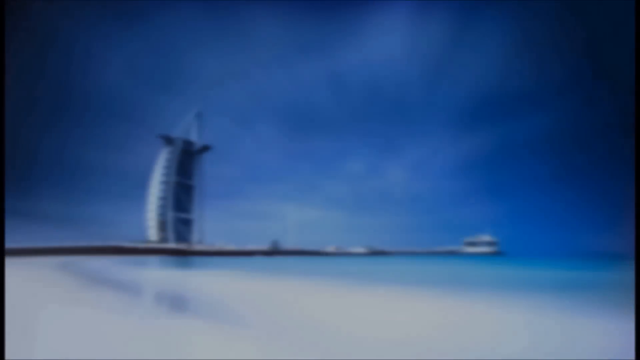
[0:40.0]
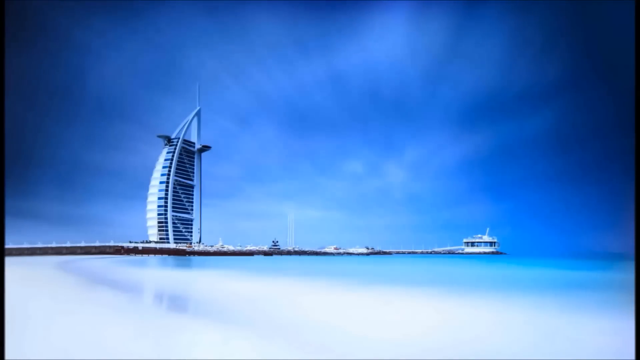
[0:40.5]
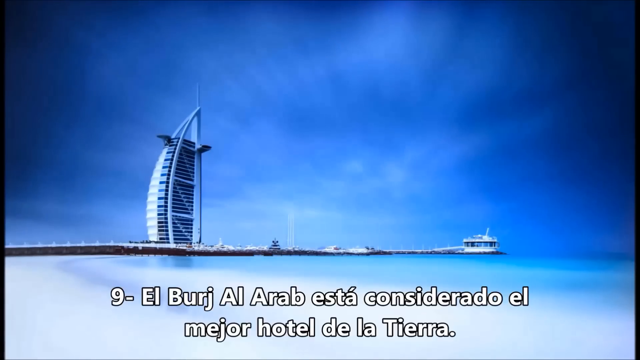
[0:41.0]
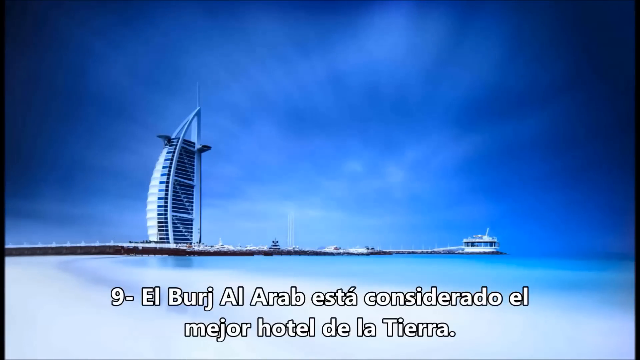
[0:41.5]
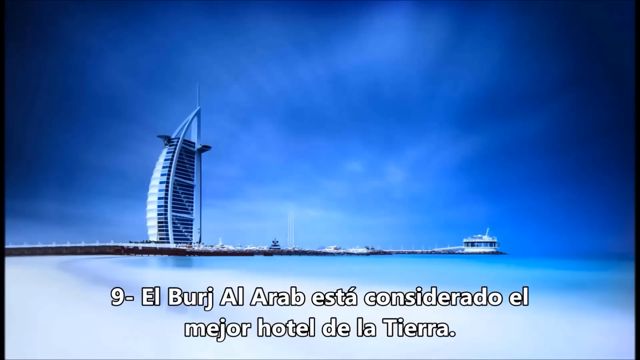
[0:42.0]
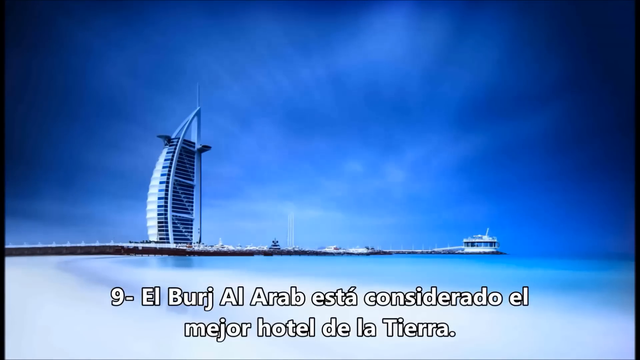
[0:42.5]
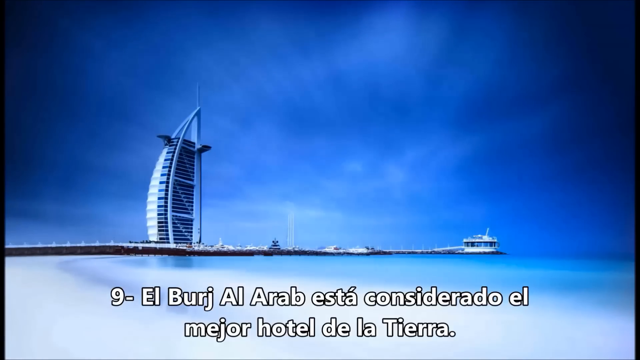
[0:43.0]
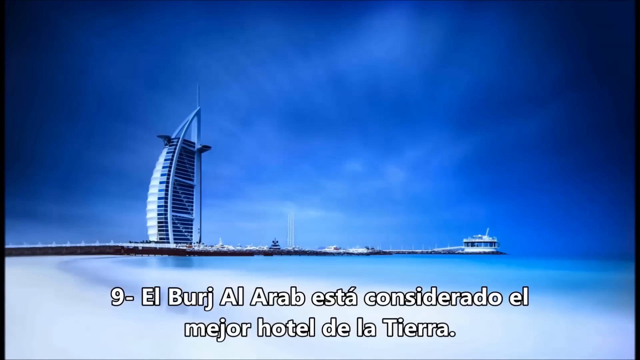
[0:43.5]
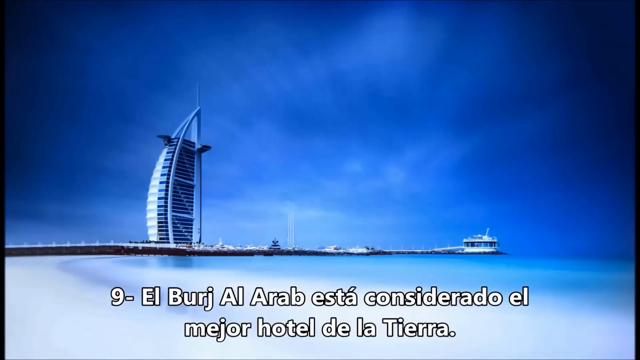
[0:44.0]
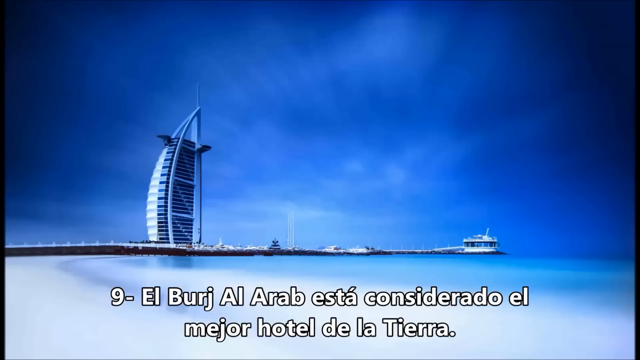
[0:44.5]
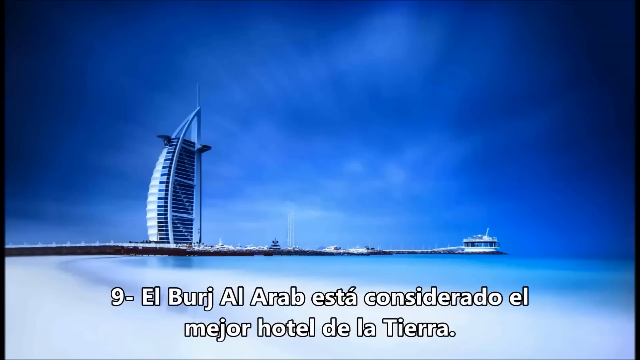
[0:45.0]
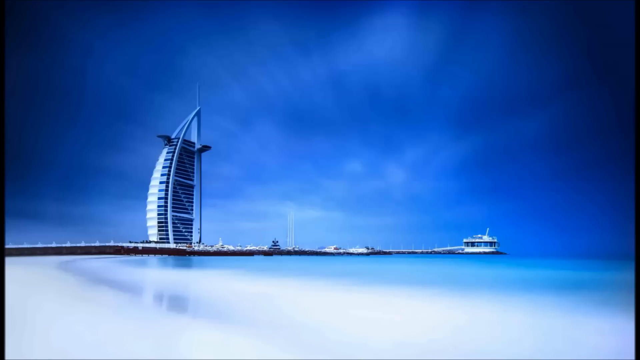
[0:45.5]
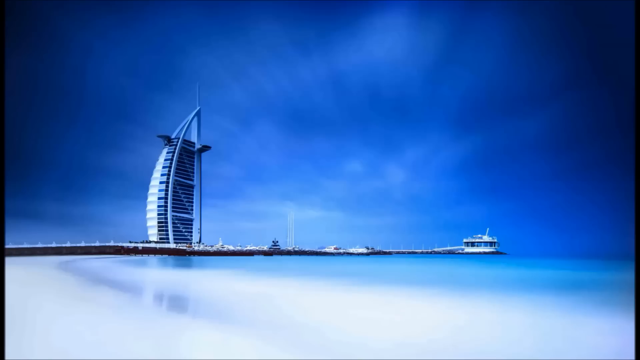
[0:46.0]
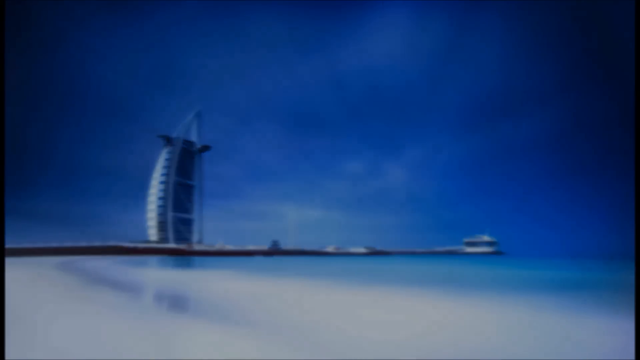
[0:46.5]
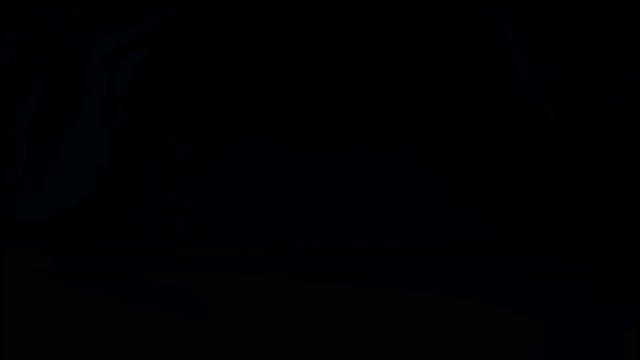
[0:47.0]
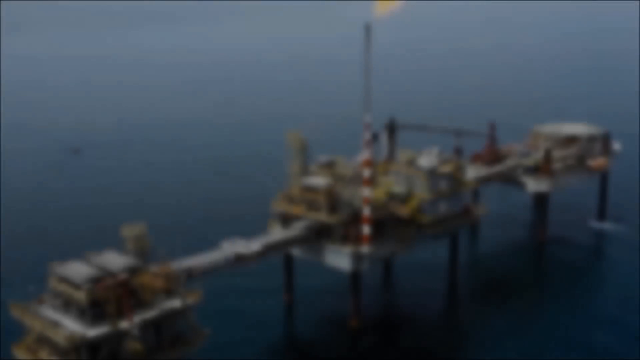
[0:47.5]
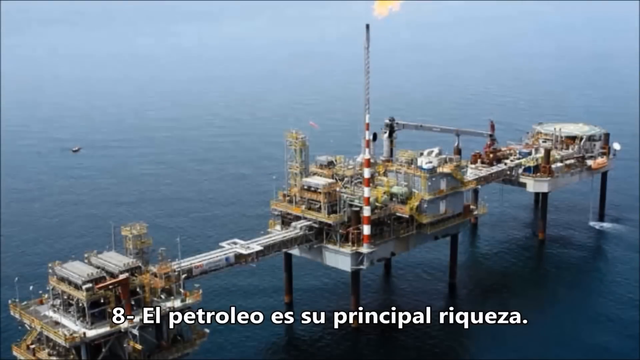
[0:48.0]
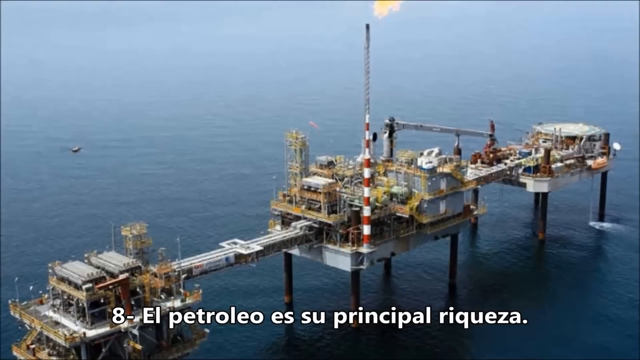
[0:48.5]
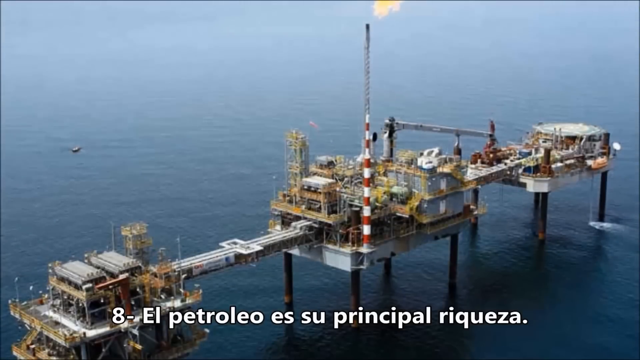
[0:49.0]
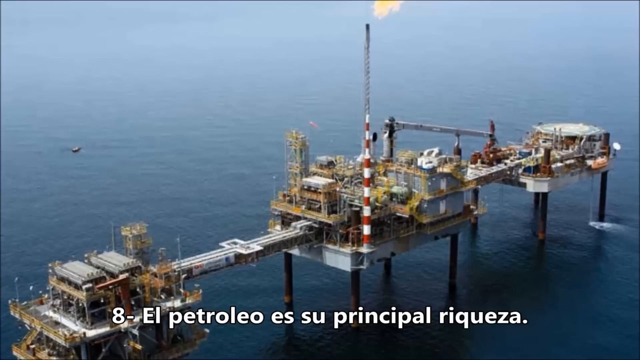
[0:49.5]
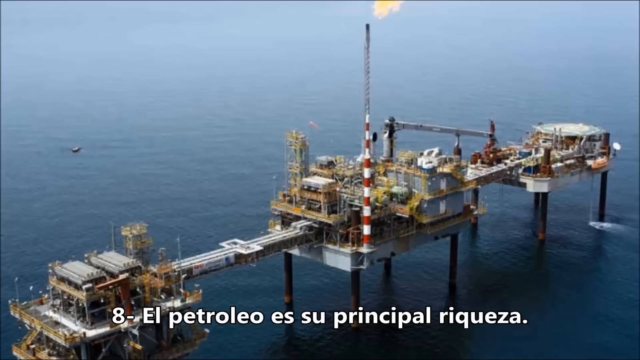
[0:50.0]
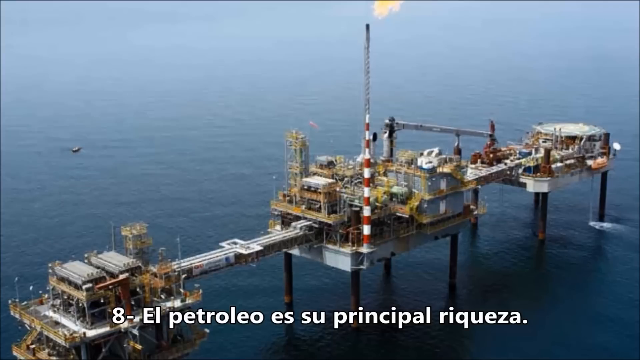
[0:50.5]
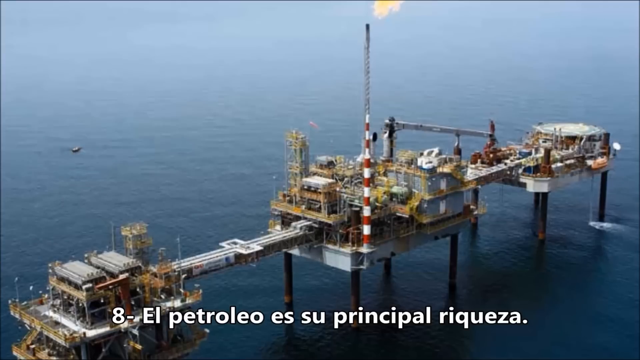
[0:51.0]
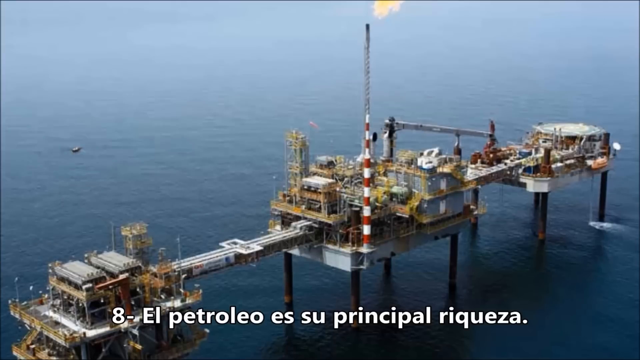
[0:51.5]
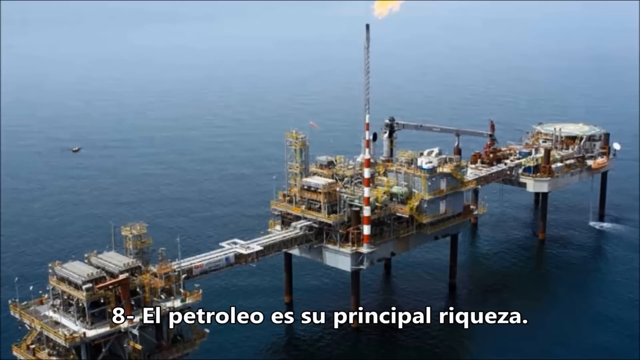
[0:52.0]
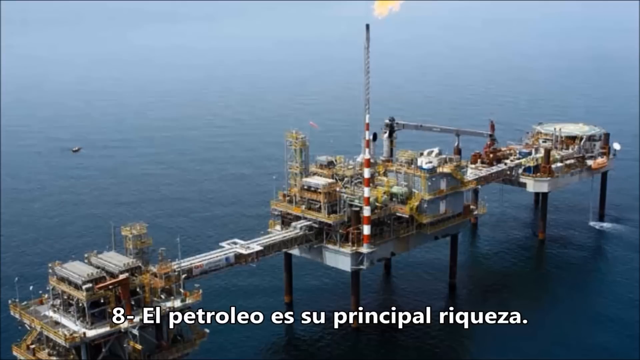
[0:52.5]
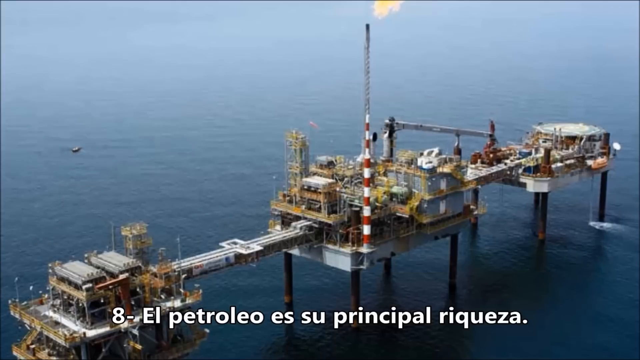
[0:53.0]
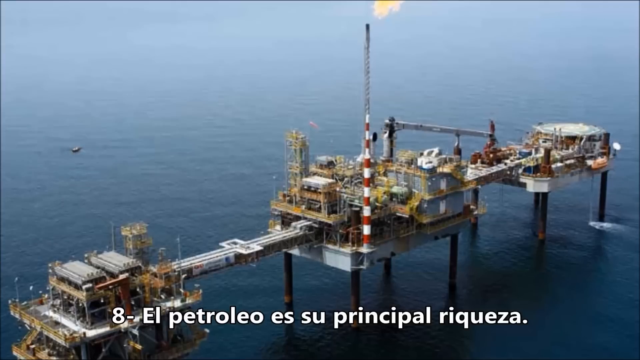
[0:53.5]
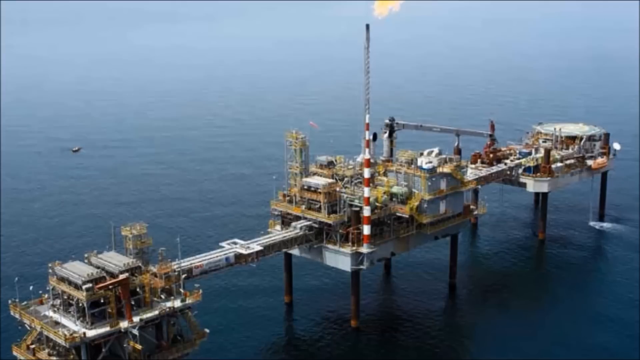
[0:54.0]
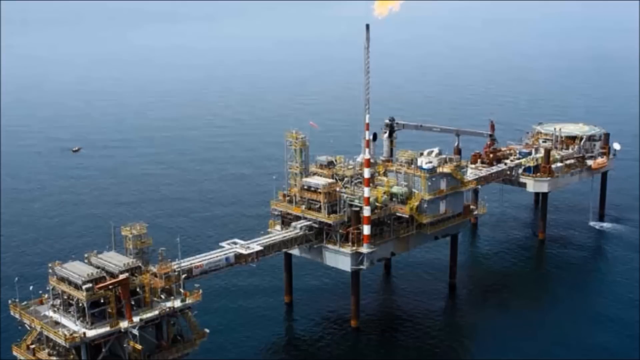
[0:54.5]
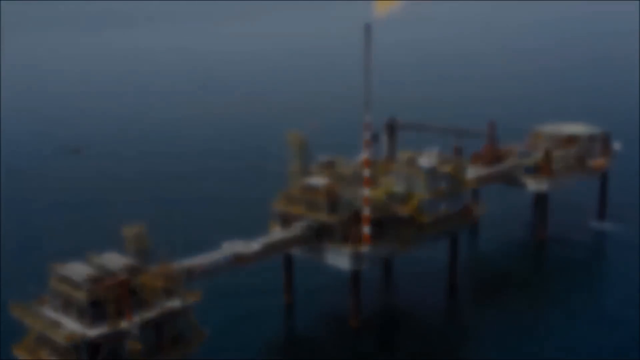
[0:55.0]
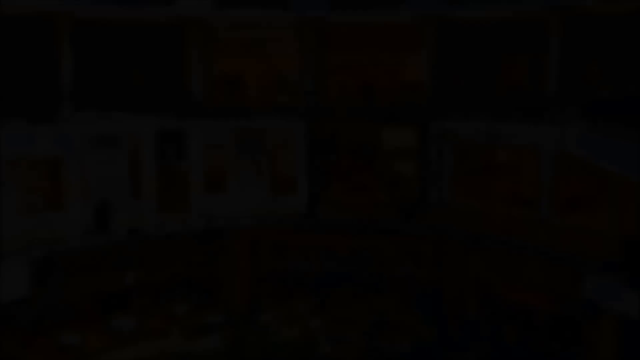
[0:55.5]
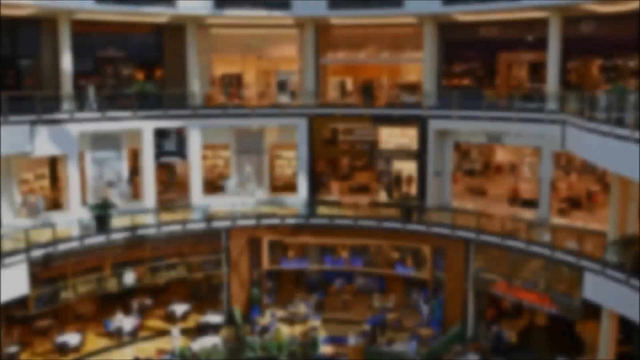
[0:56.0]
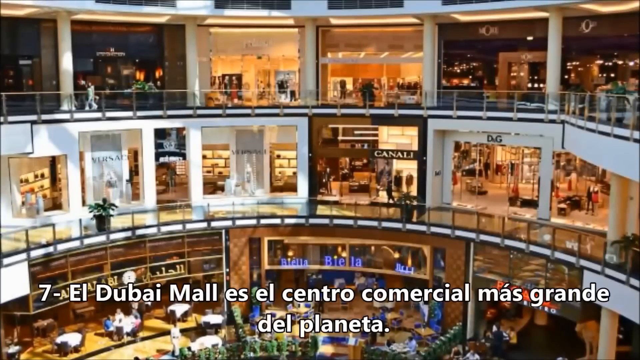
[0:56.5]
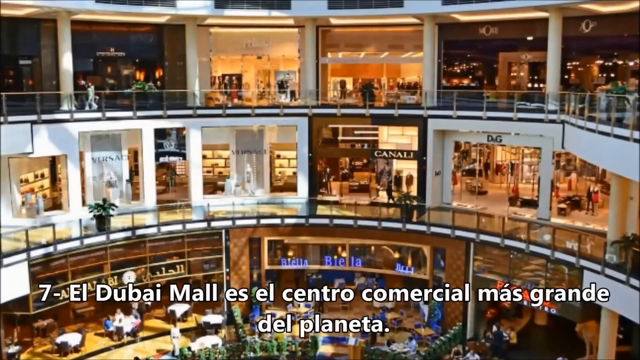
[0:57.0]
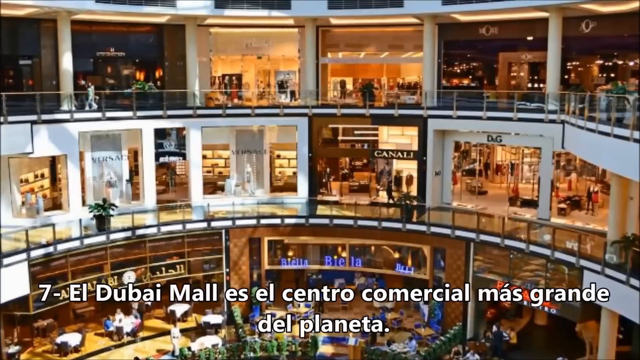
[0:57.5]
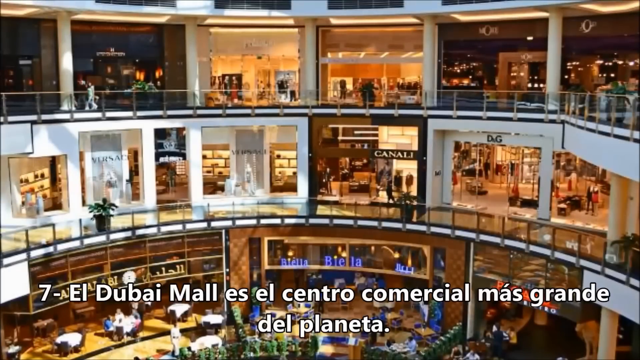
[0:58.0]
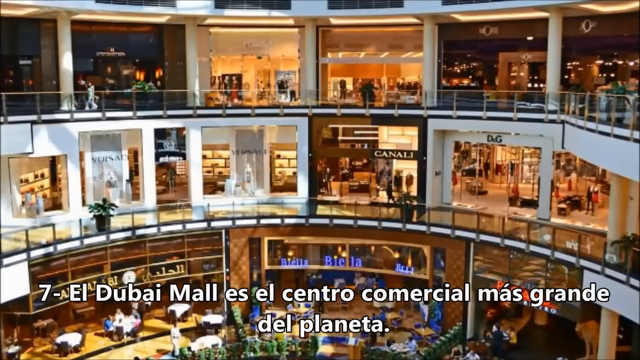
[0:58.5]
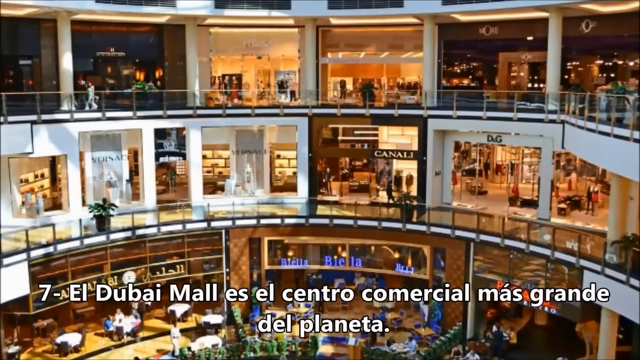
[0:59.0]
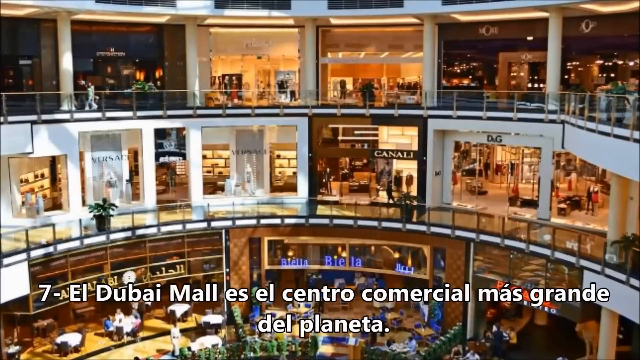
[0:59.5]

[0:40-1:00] The video transitions to what looks like a port out on the ocean. The picture looks edited, making it hard to tell whether it was taken at night or during the day. There is what looks like a building resembling a hybrid between a skyscraper and a lighthouse, or possibly a very tall sail on a ship. The pier leads out with a boardwalk that leads to a ship at its edge. Next comes what looks like a pier or an oil rig; the text shown below the image indicates it is a petroleum rig, at the number 8 spot. The video then transitions to an image of what seems to be a huge shopping mall with a bunch of luxury stores, looking very ritzy and high end; the accompanying text indicates it is a shopping mall in Dubai.